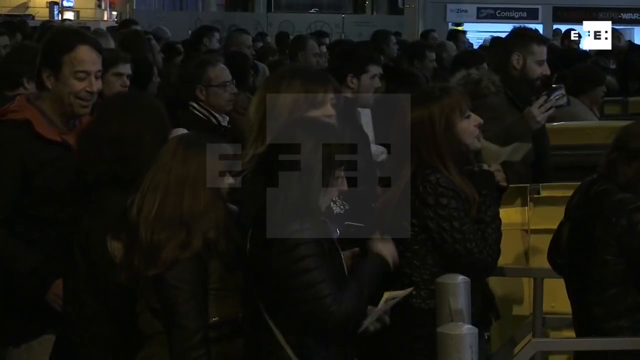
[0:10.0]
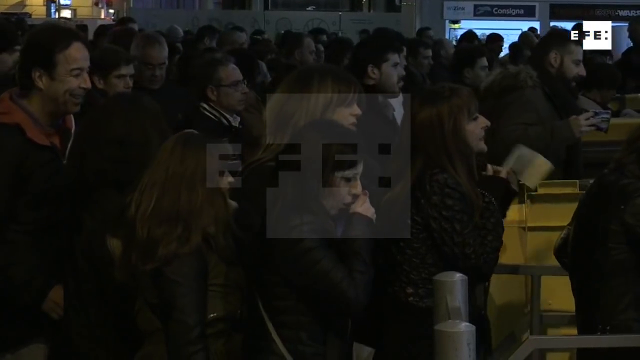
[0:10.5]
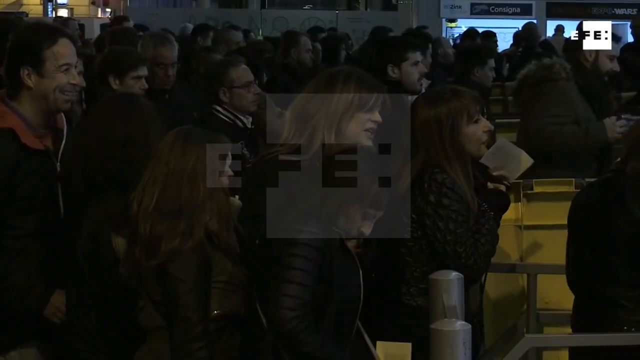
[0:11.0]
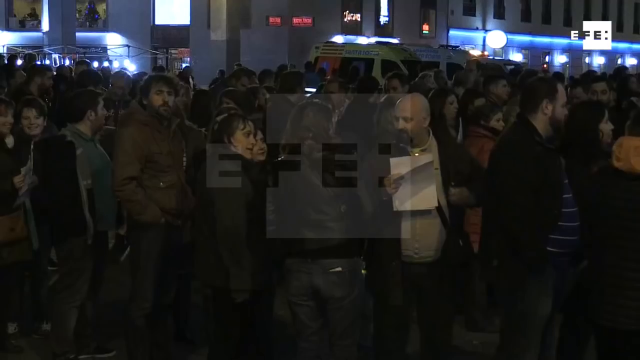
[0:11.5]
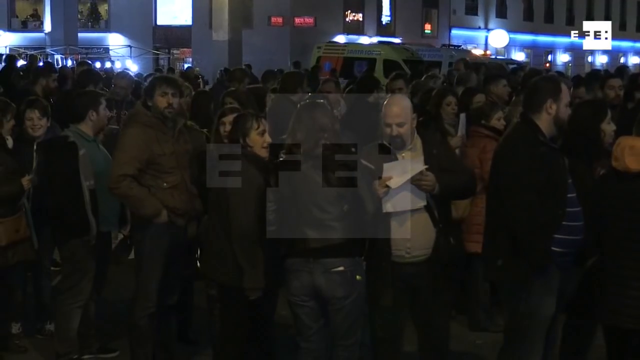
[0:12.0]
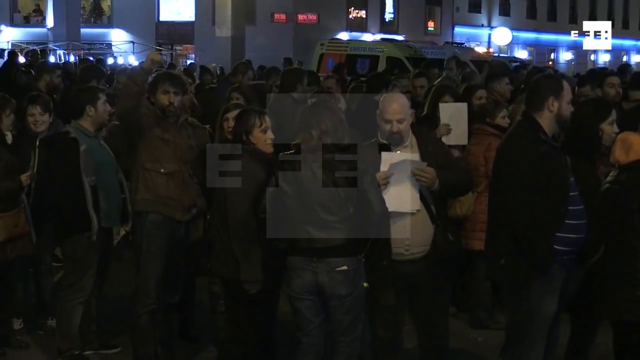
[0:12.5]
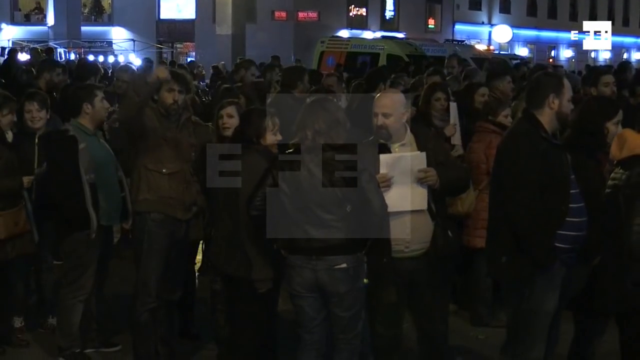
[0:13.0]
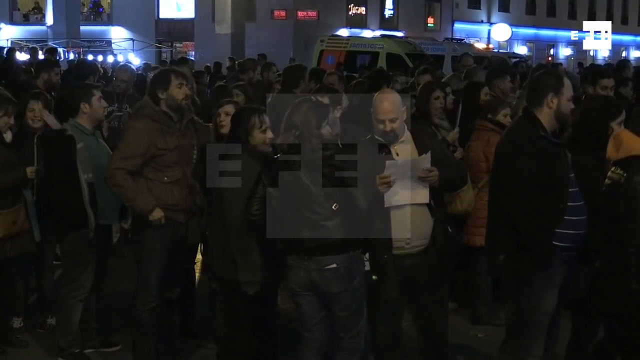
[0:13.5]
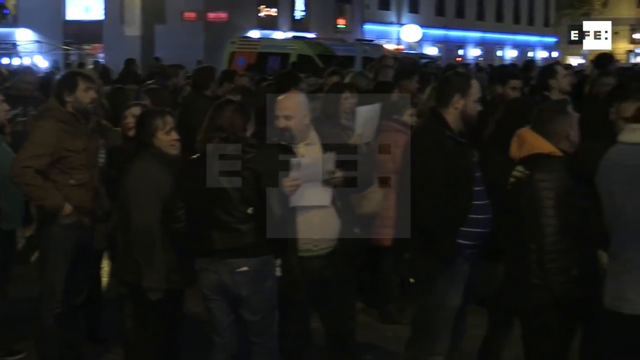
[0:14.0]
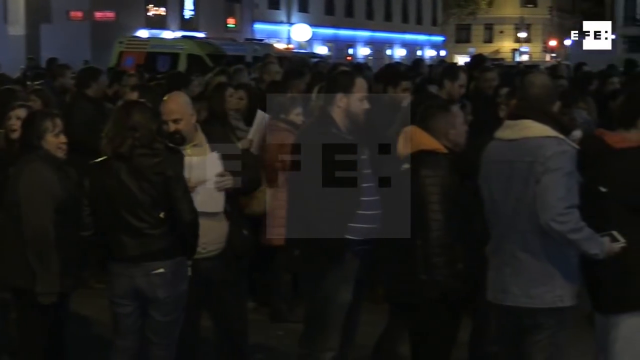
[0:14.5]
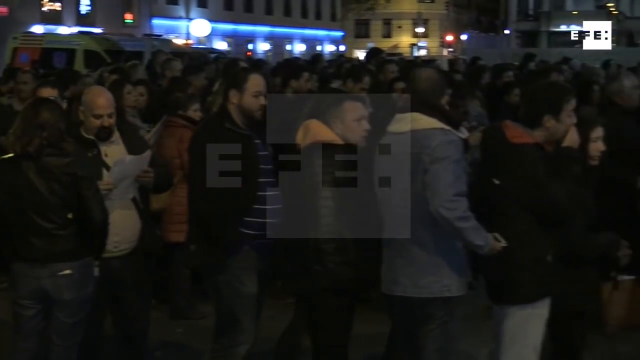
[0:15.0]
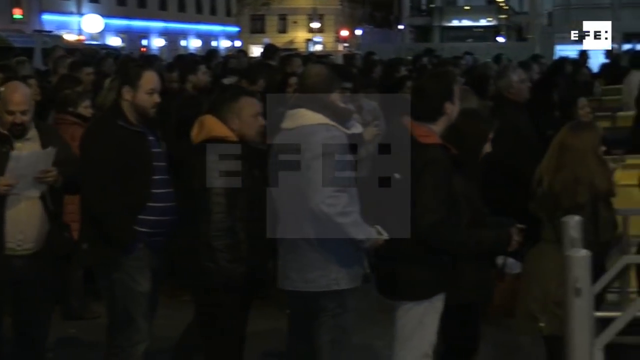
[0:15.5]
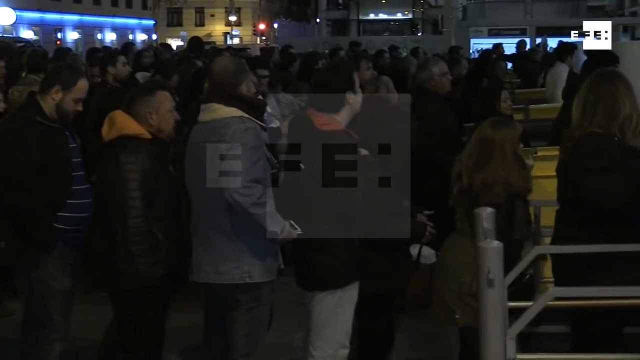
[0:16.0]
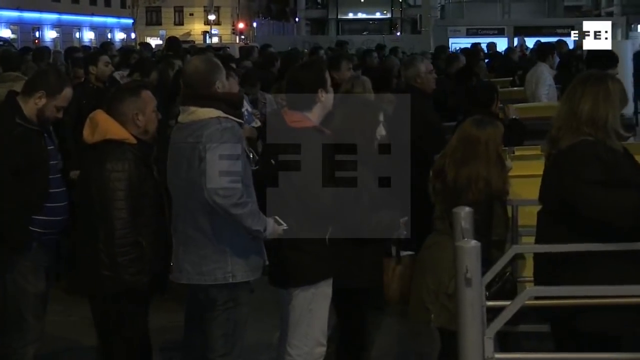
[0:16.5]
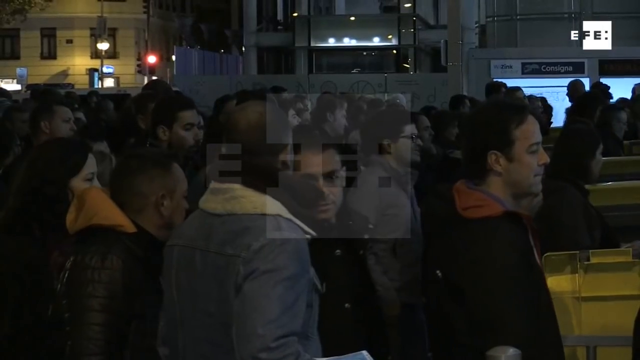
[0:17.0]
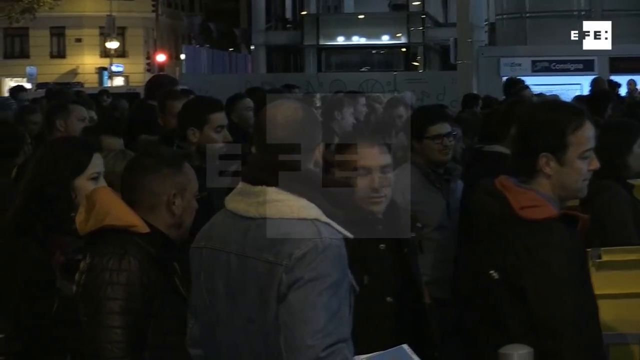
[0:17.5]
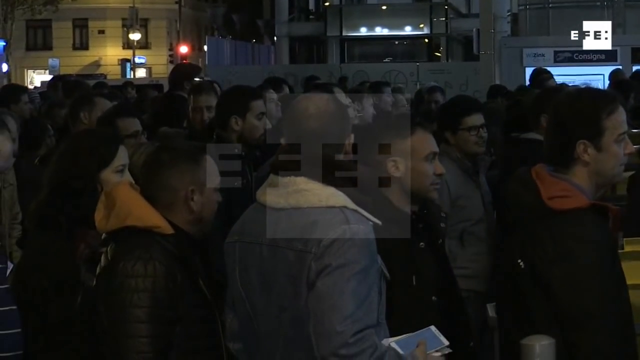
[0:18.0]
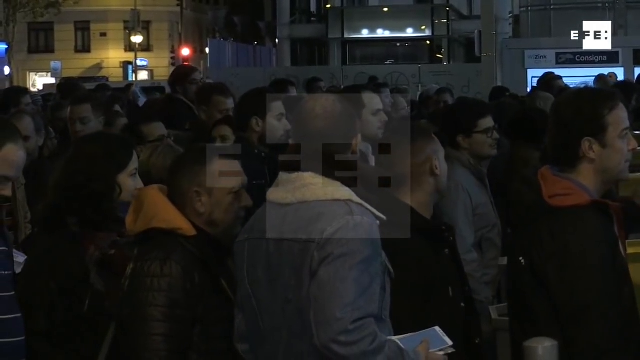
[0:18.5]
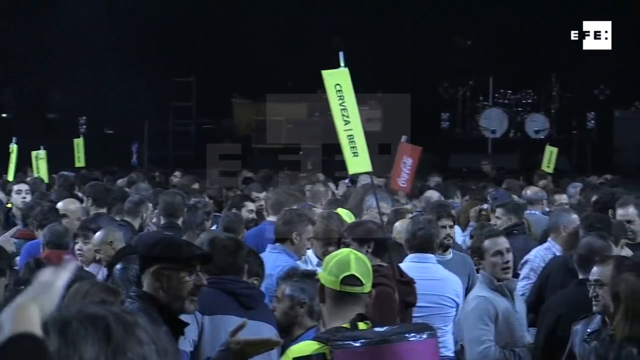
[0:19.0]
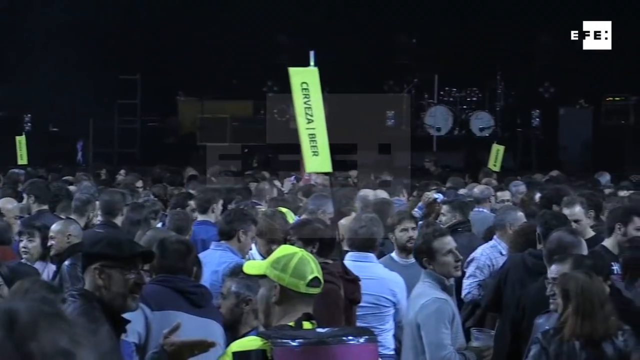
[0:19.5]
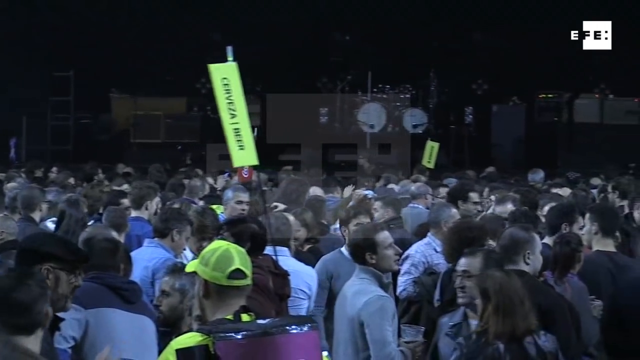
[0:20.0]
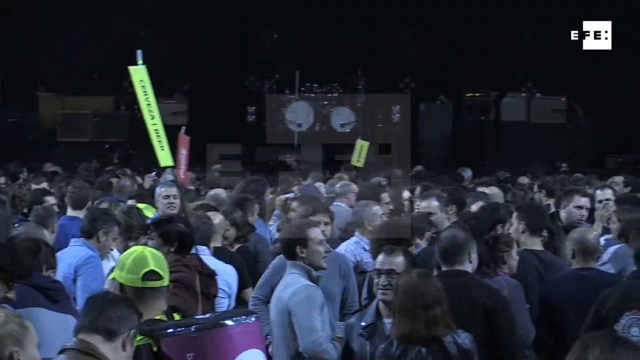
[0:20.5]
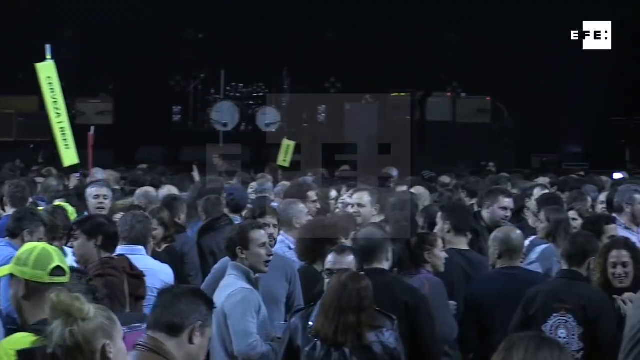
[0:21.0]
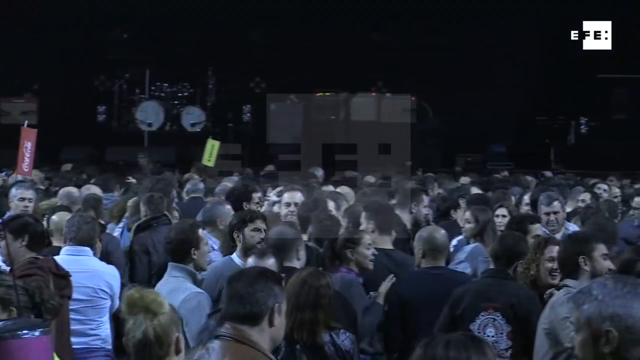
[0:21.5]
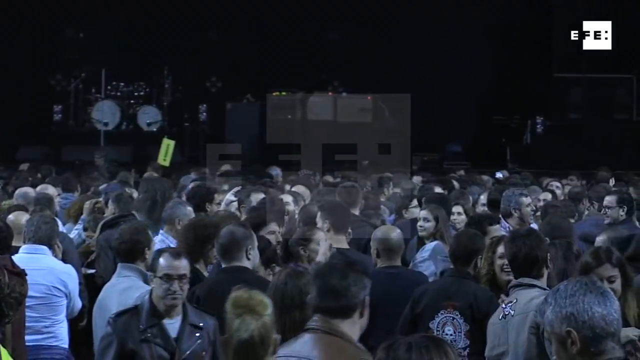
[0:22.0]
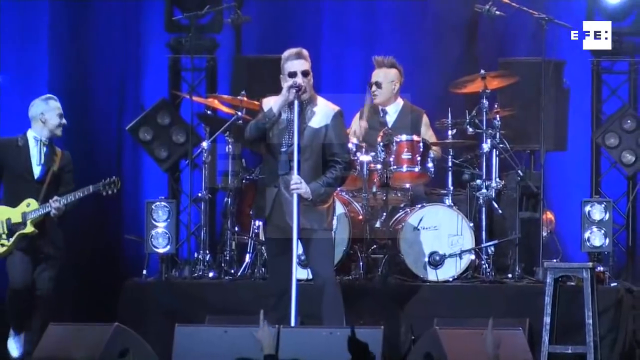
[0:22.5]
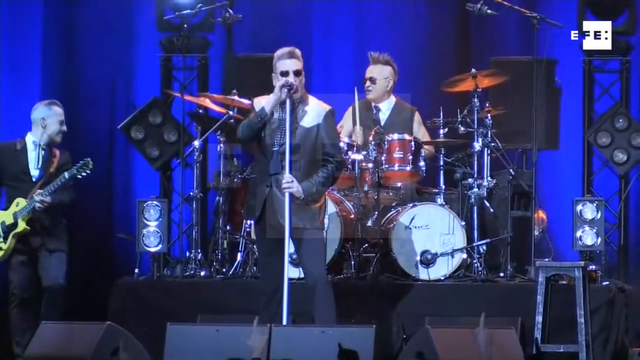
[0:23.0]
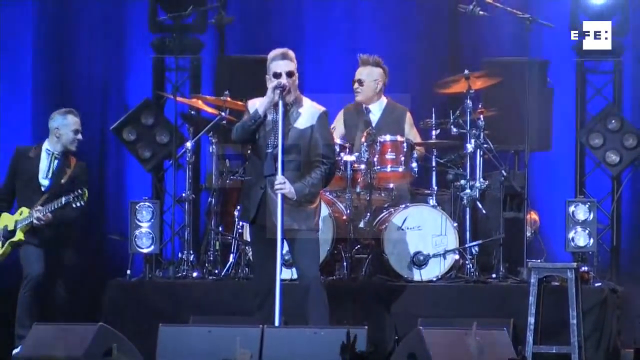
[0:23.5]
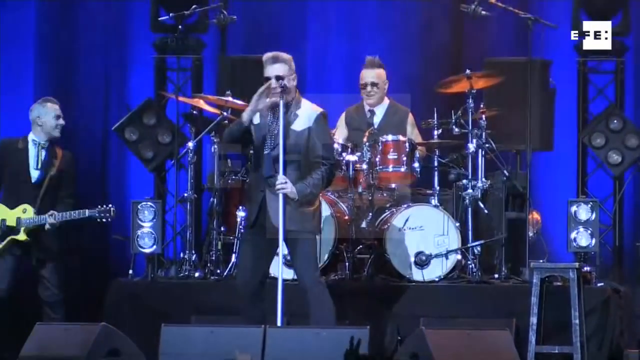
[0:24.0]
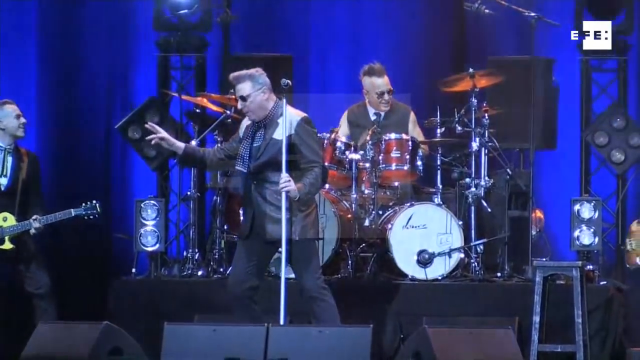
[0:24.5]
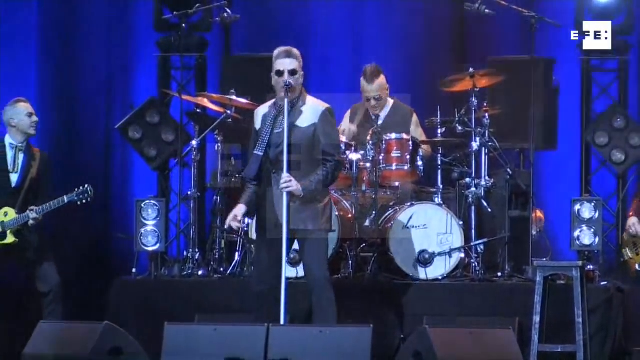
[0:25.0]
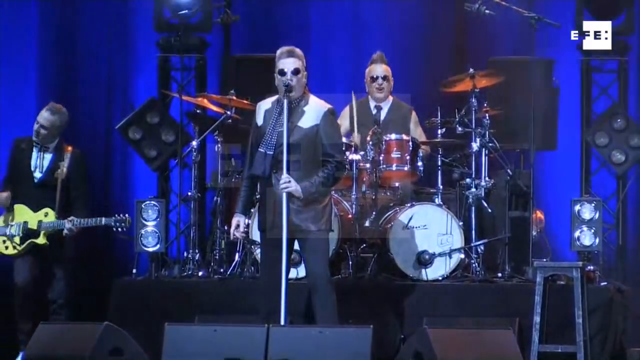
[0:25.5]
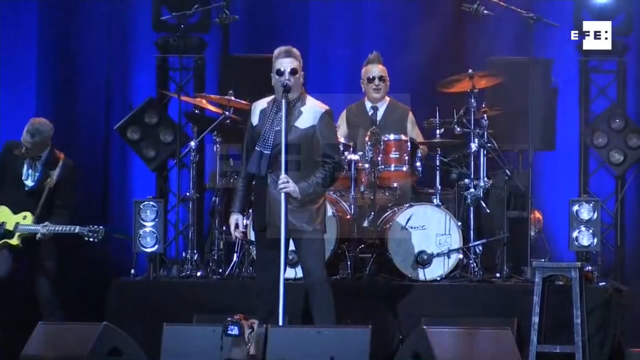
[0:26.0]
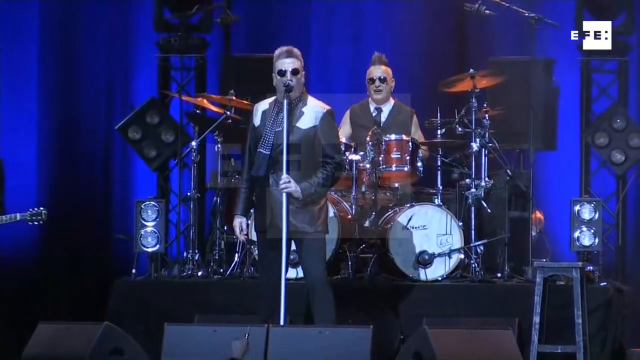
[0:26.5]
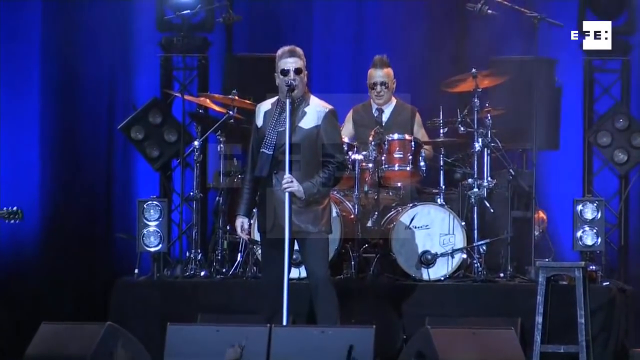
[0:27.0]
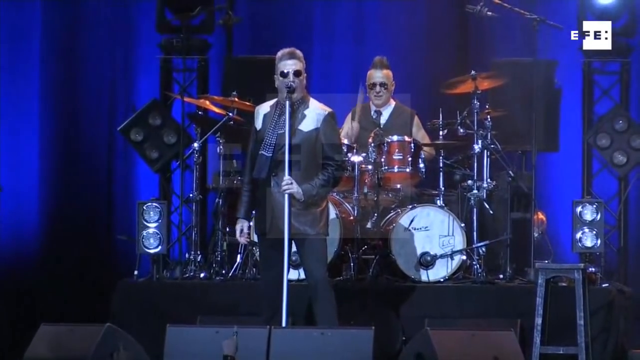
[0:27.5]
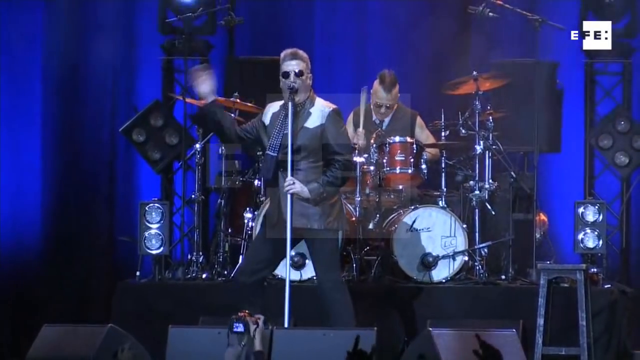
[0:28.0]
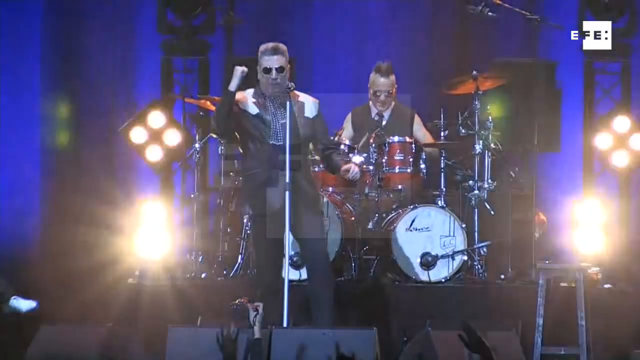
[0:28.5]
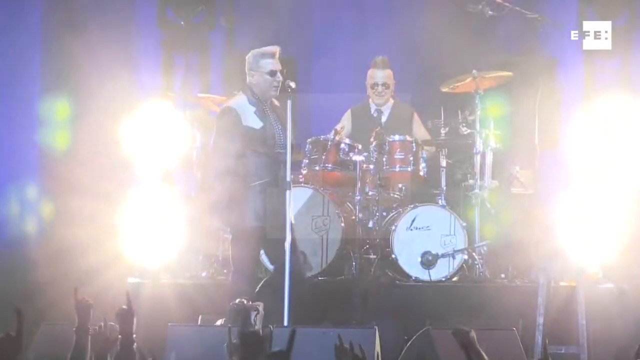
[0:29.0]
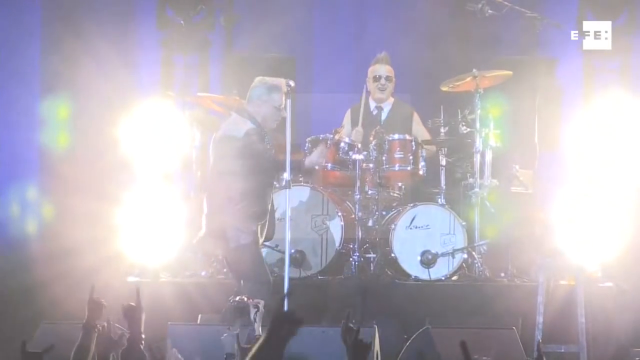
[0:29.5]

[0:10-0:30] A big crowd of hundreds of people walks through small areas, apparently turnstiles, to get into the stadium. The video then cuts to a stage. In the middle of the stage is a red drum kit. The drummer has a spiked mohawk with shaved sides and wears black sunglasses, a sleeveless white button-up collared shirt with a tie, and a dark gray vest. In front of him is a microphone, and the singer stands behind it facing the camera. The singer wears blue jeans and a suit jacket that looks like leather with white shoulder pads; his hair is spiked up and he wears black sunglasses. To his left on the stage is a man in a white button-up shirt and a black suit jacket, with kind of spiked gray hair, holding a yellow electric guitar. Behind them is a dark blue curtain, and lights surround the drum kit on the left and right sides, facing outward toward the audience.